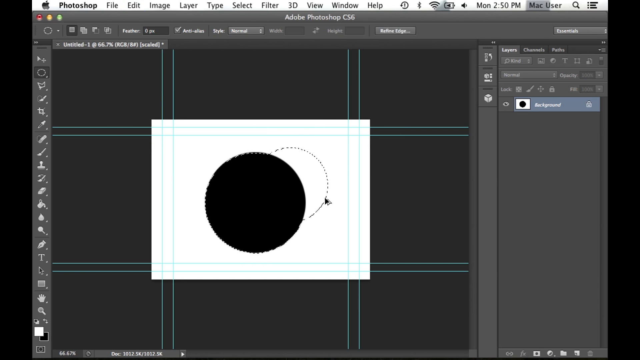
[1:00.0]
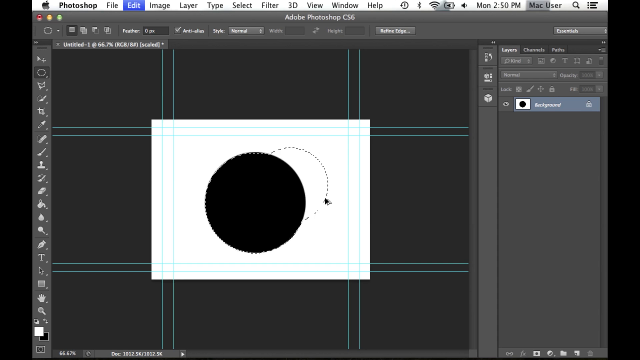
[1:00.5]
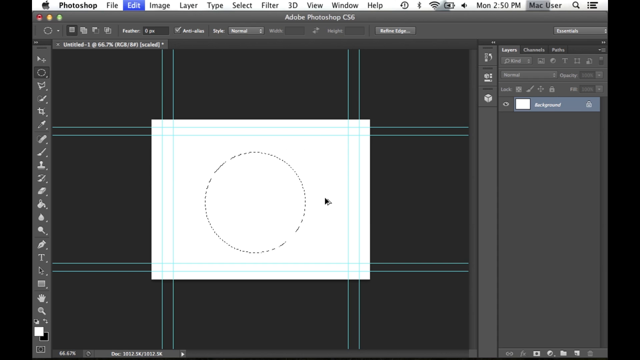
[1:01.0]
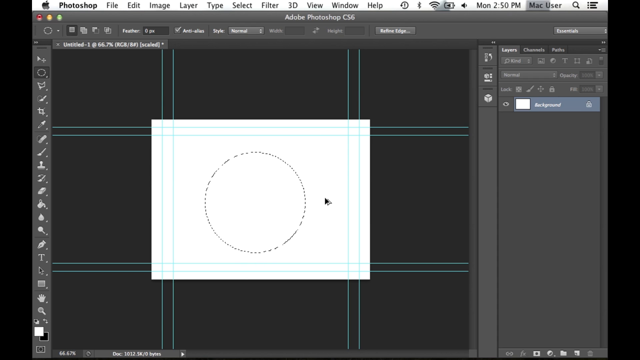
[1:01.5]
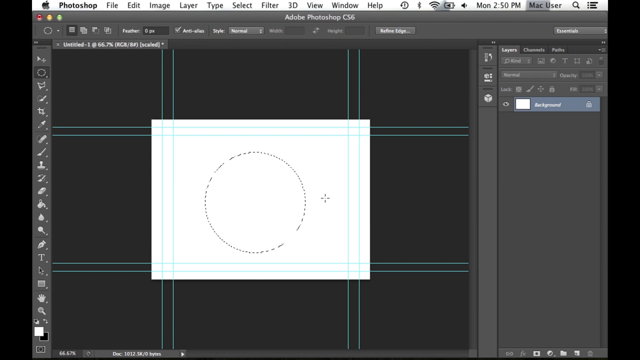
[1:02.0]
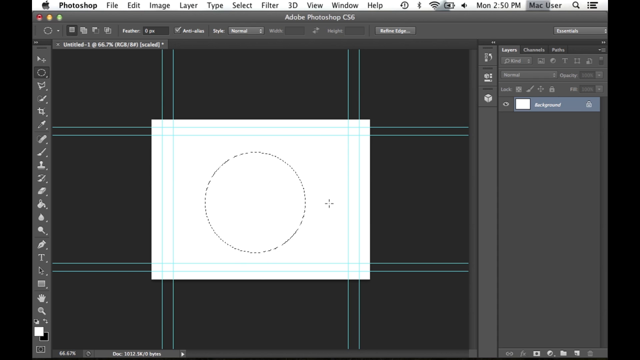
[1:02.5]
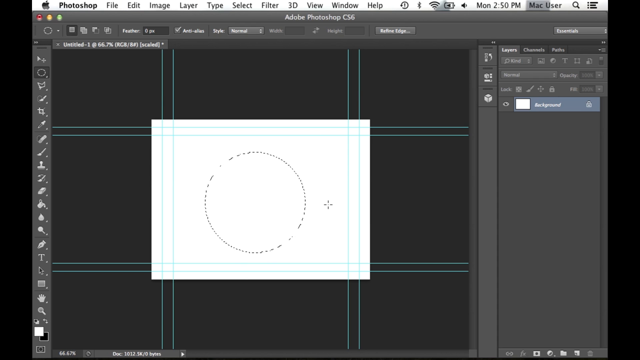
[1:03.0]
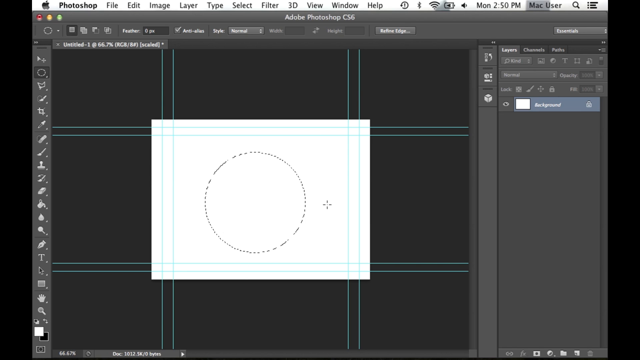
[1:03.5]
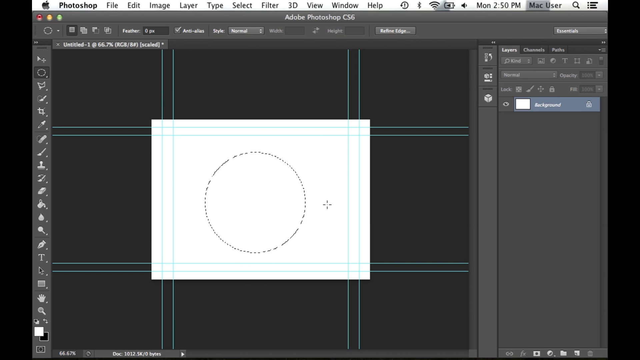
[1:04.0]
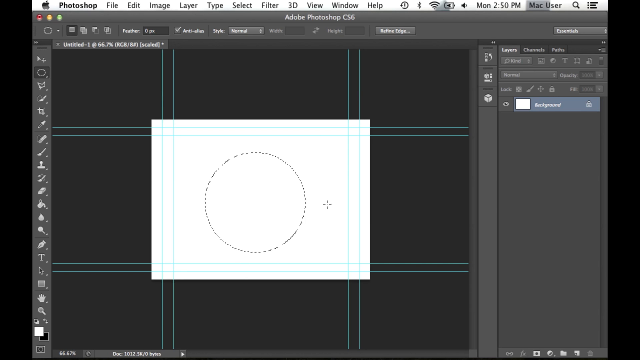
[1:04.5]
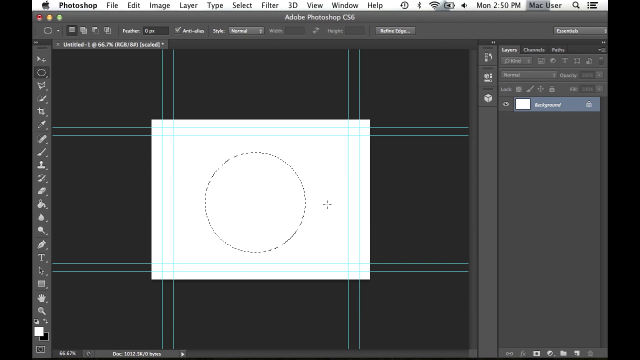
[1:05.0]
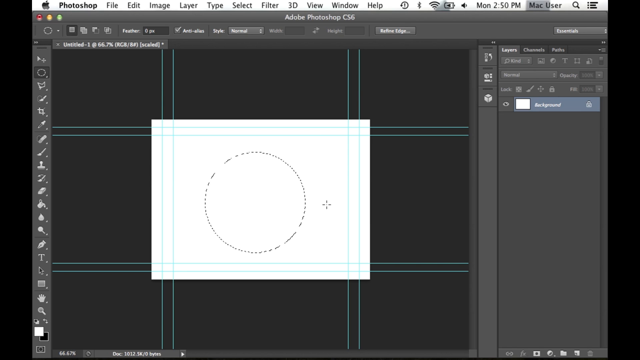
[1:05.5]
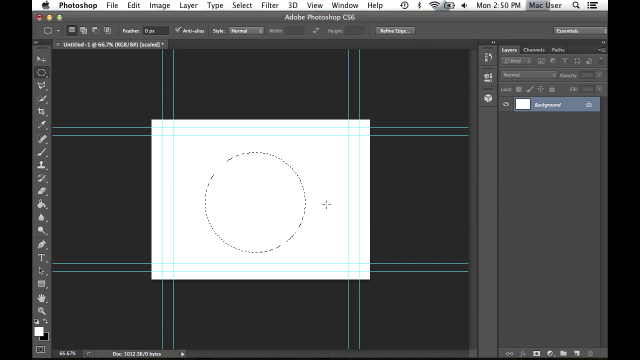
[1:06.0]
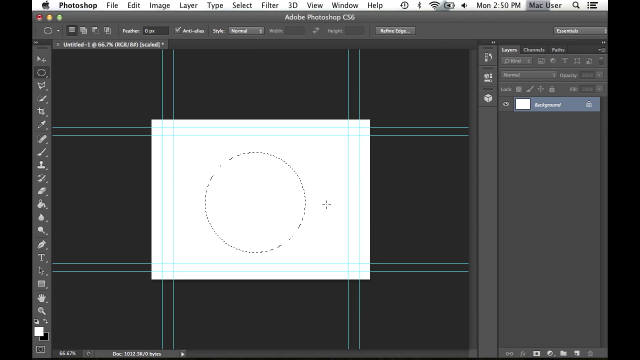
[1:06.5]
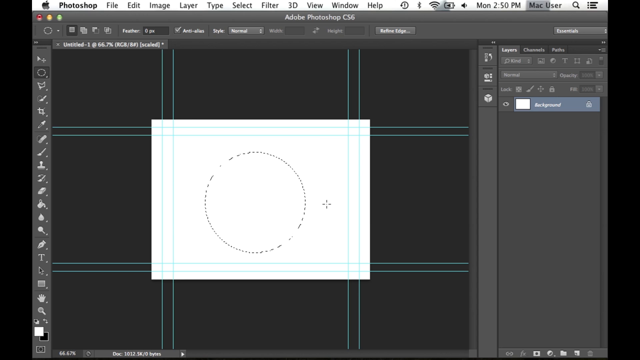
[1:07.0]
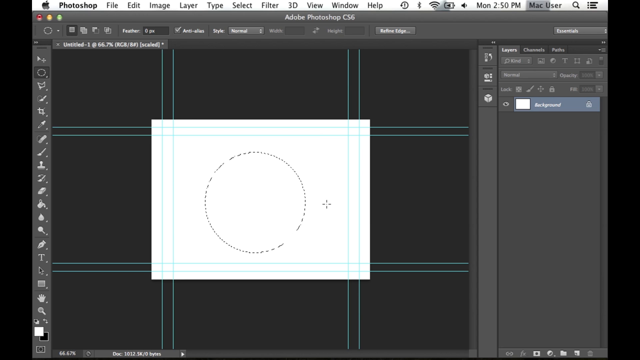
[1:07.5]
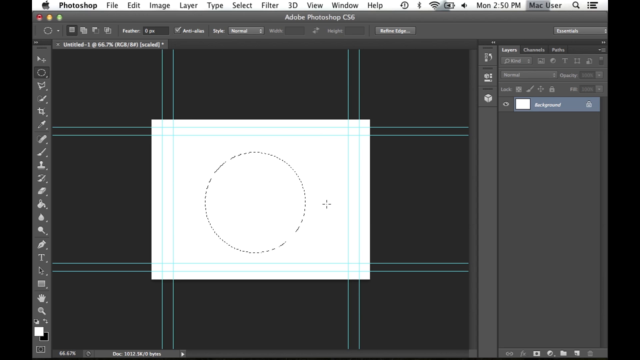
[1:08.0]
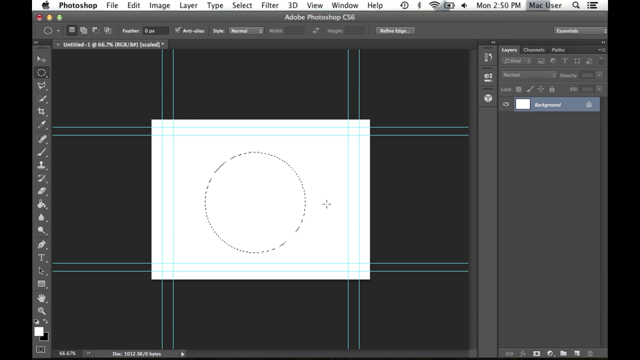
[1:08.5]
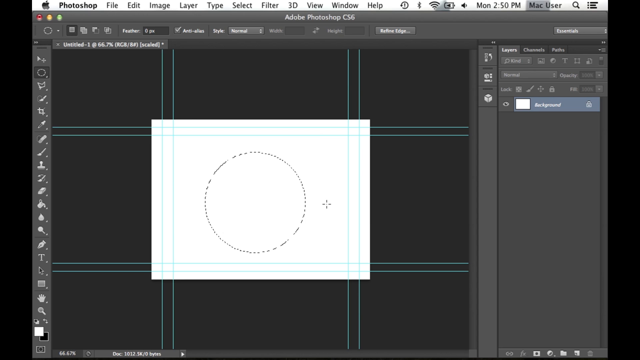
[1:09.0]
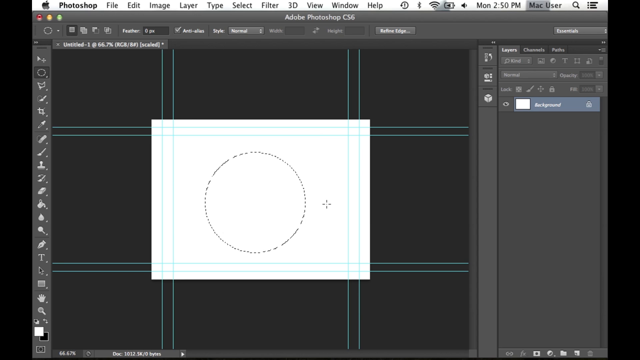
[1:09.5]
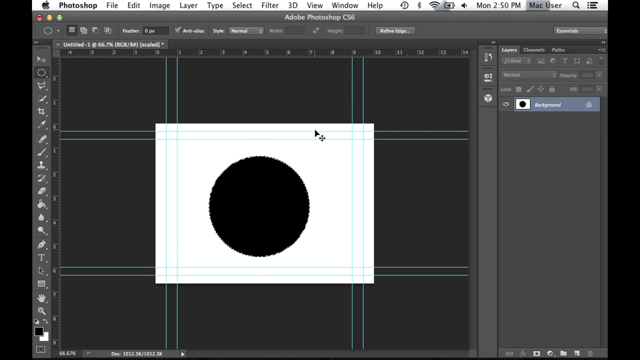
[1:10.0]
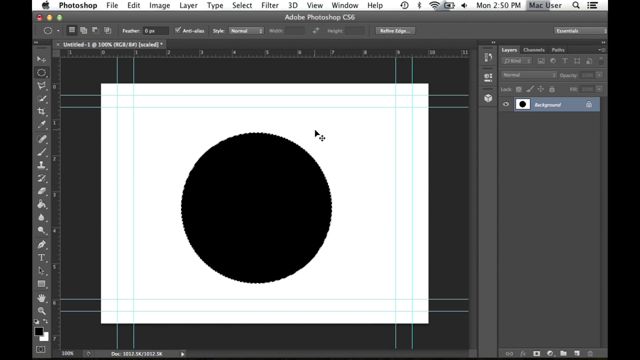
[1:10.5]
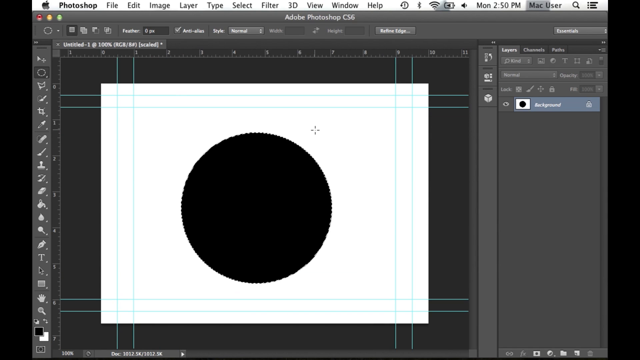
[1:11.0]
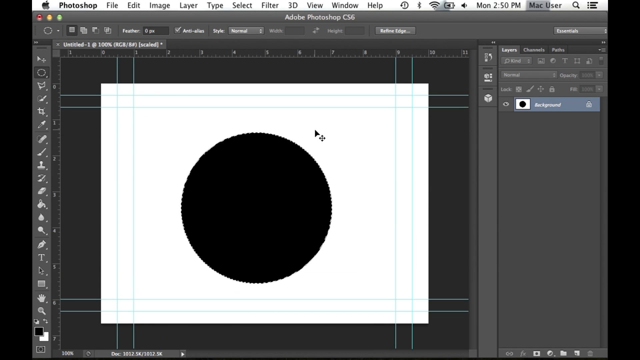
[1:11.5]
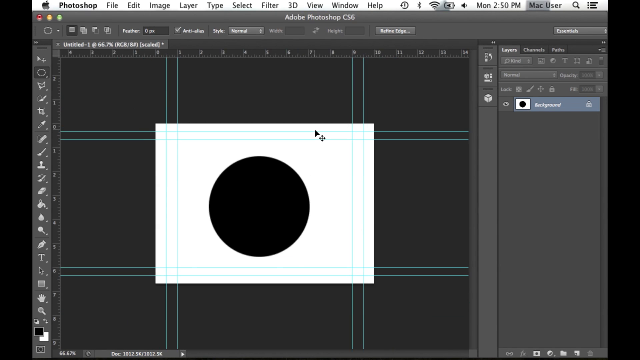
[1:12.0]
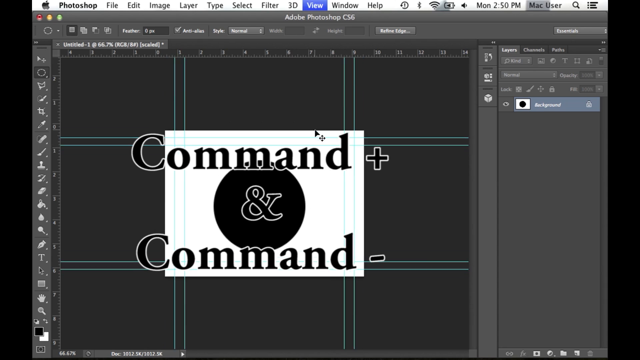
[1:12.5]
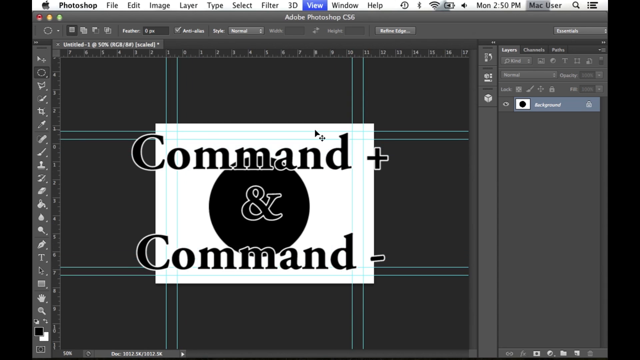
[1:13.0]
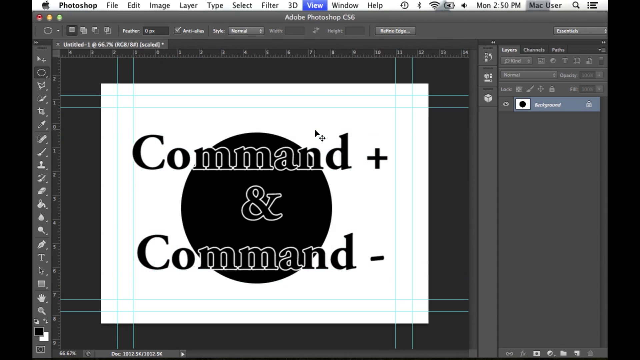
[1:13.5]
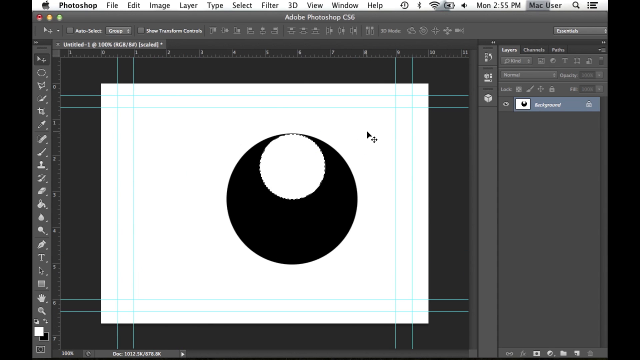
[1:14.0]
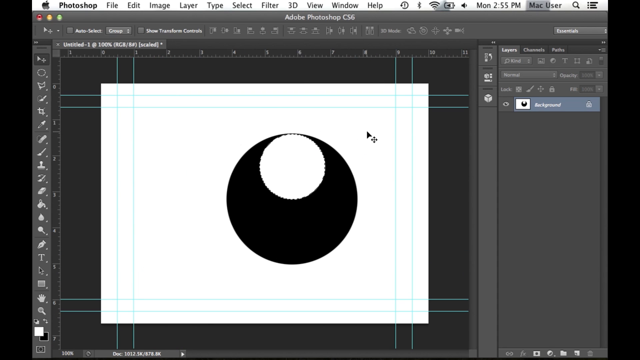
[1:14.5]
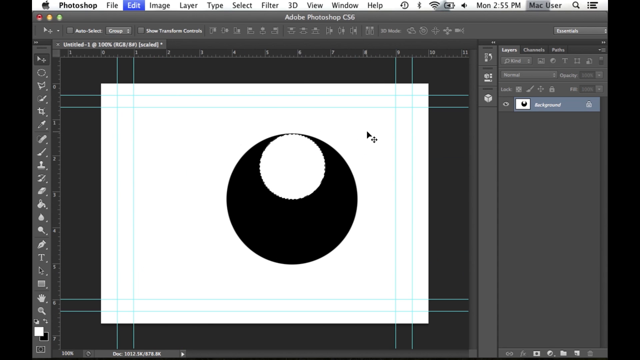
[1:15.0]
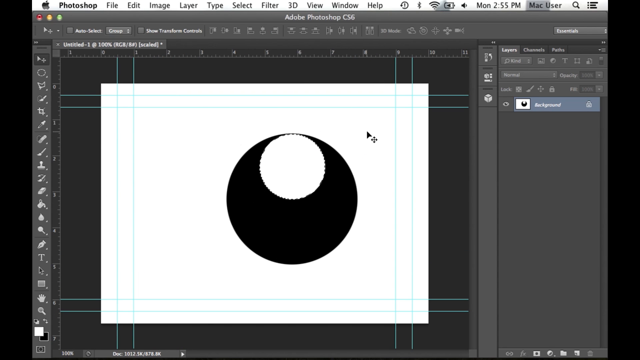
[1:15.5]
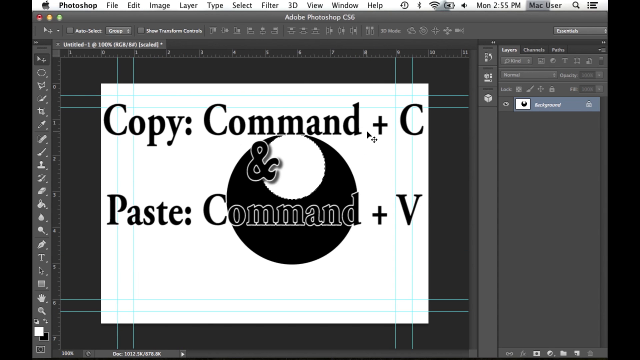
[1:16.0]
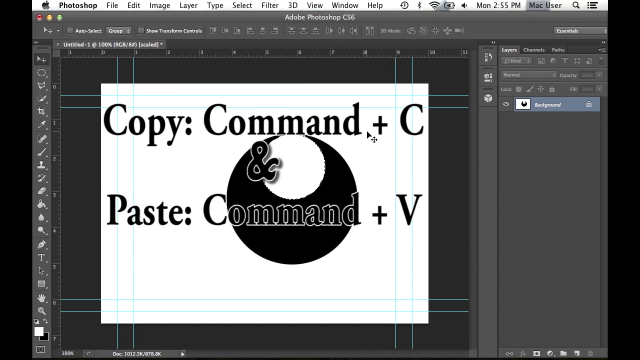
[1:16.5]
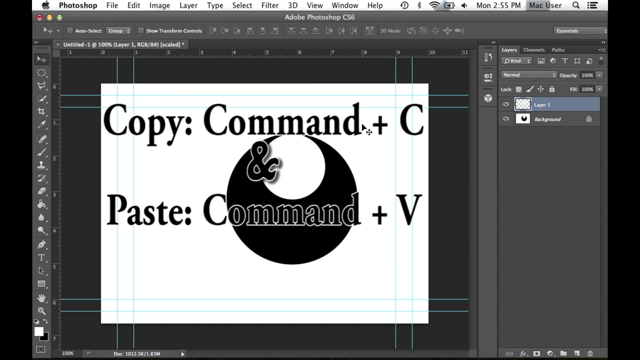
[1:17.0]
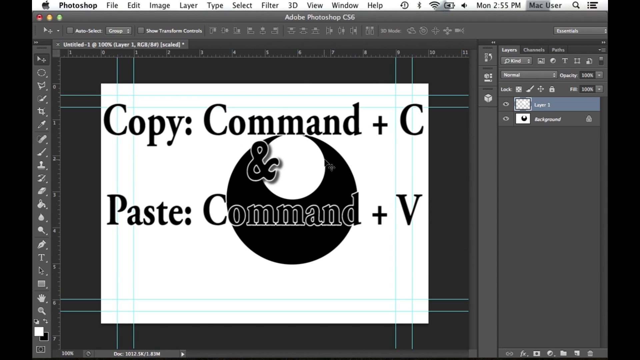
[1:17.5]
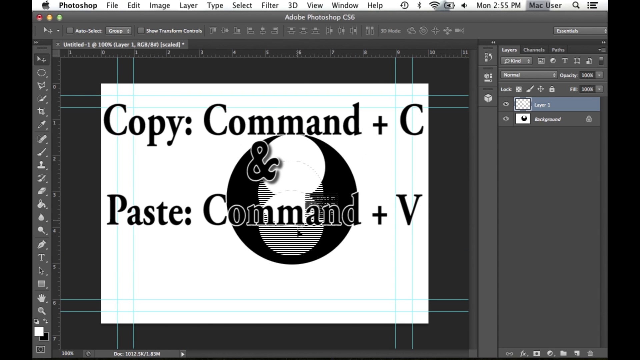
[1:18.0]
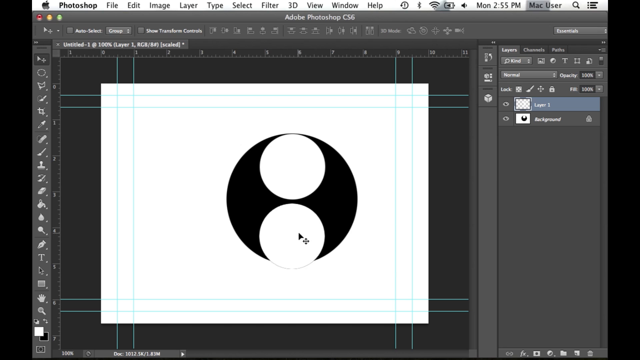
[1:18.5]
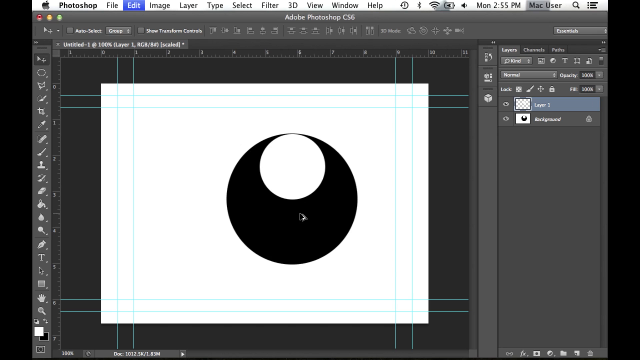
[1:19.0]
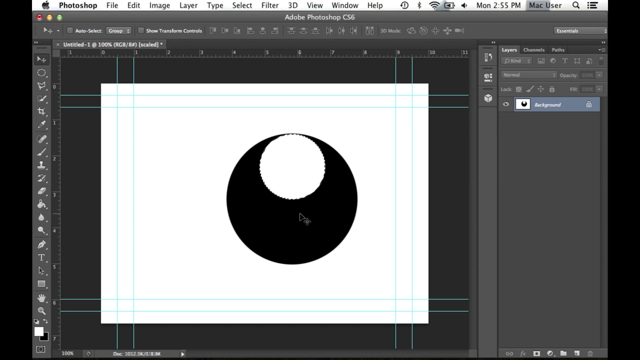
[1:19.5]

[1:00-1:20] The video is a little wider than it is tall, with black letterboxing about 5% in from each side. It starts on someone's Mac desktop: in the upper left are an Apple icon and "Photoshop", followed by the menu options file, edit, image, layer, type, select, filter, 3D, view, window and help. Below is the typical Photoshop setup. At the top, a label in white over a gray background reads "Adobe Photoshop CS6". The tool icons run along the left. In the center project area is a white sheet with a black dot in the middle. As the video progresses, the dot changes to only a dotted outline.